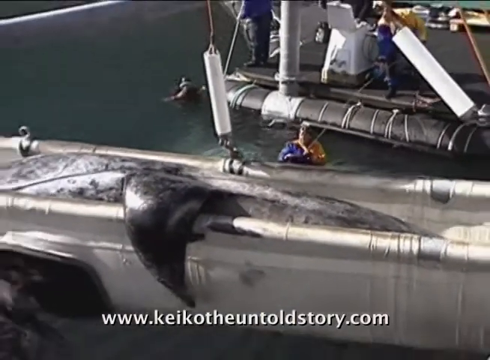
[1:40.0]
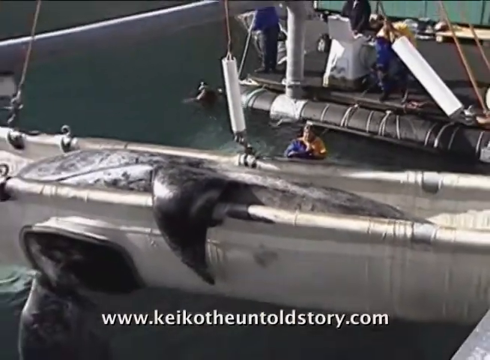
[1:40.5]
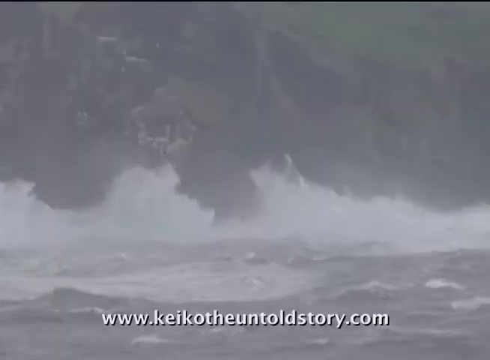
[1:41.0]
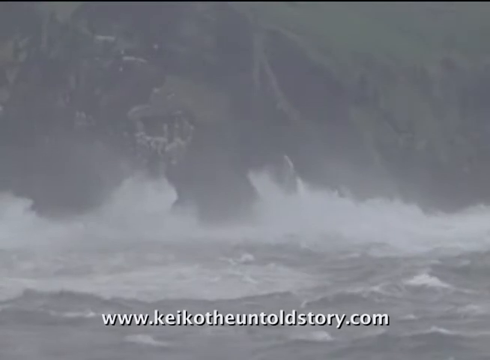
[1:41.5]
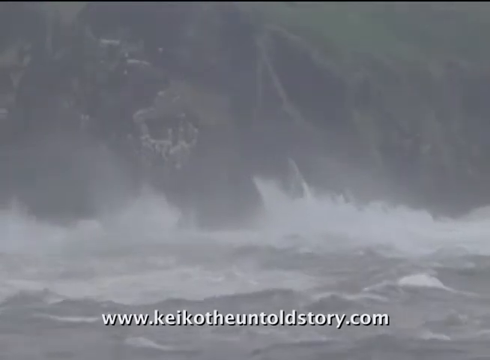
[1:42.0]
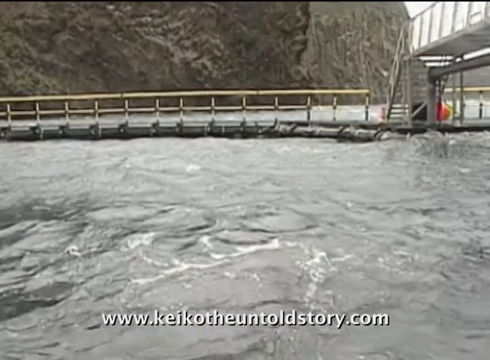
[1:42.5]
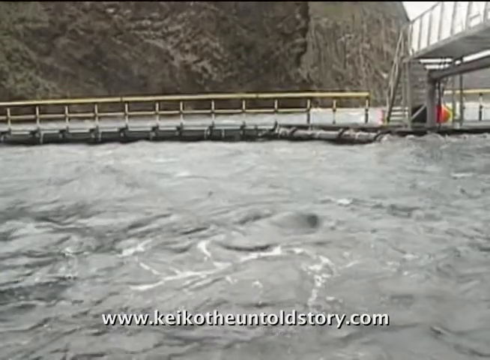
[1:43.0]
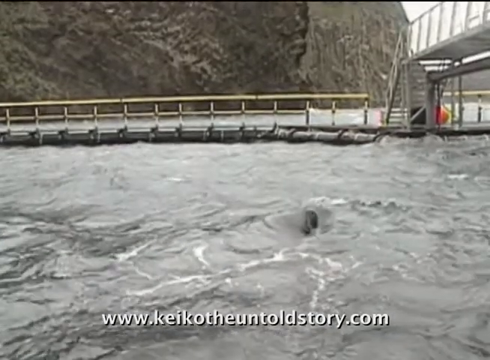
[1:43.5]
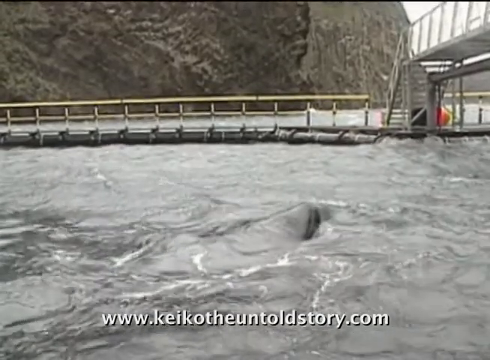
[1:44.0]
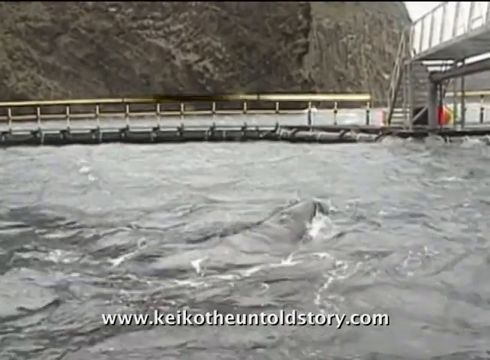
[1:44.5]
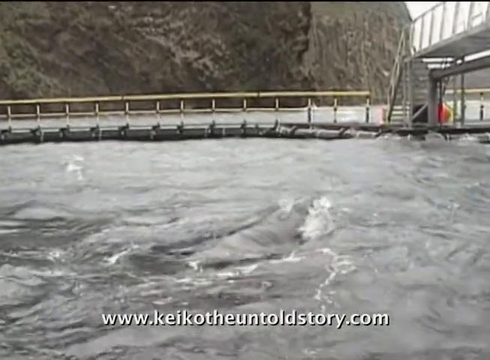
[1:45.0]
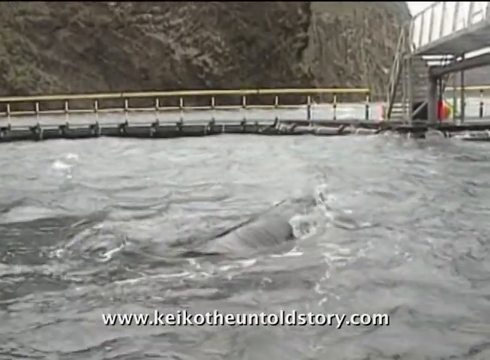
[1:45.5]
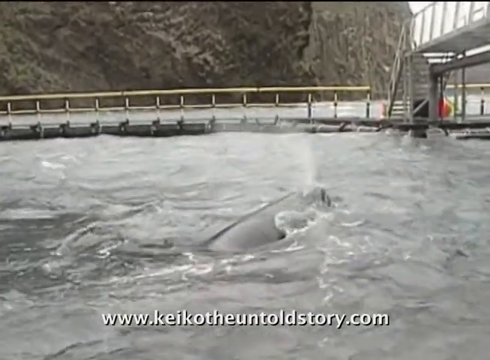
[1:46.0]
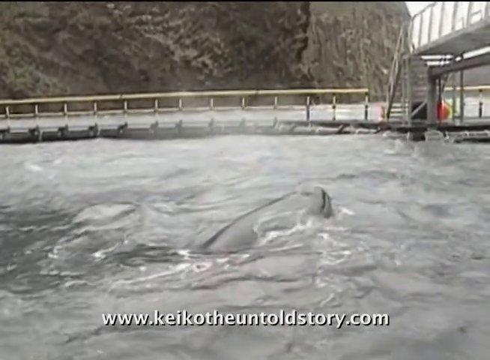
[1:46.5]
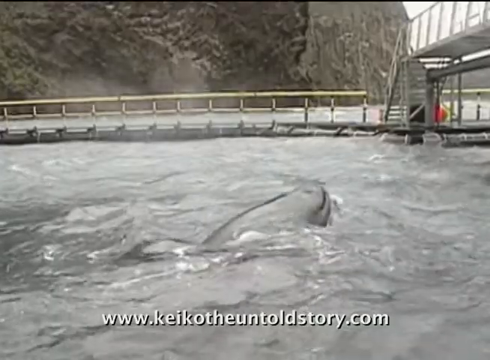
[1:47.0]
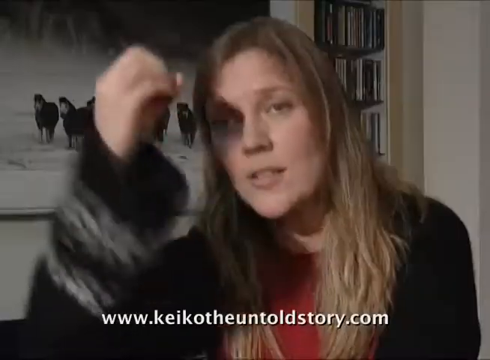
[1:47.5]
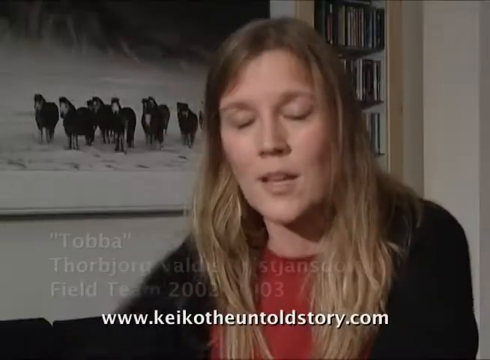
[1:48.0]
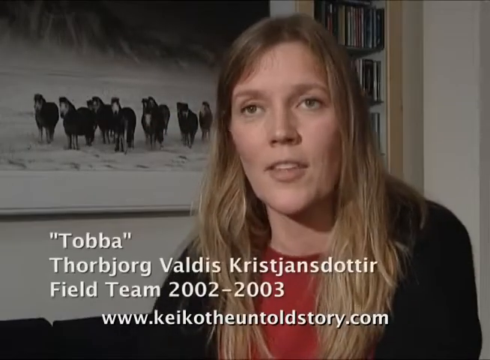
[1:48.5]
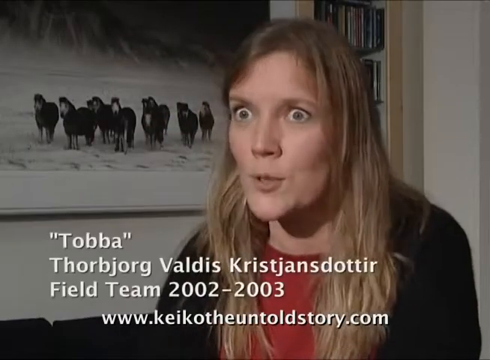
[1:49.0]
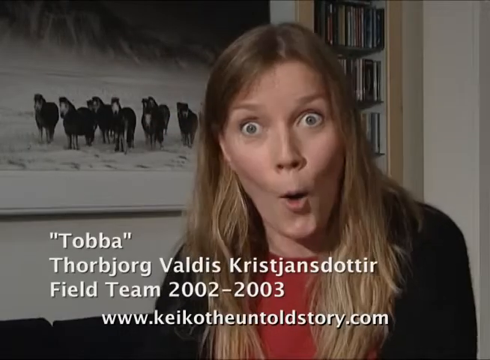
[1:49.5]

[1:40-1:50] The orca is in the sling with its fin flopping over the side, with water in the background. In the water are two men, one in full scuba gear with a mask and the other wearing a blue and orange suit. Behind them is a raft with a pontoon, with two workers on it. White lettering at the bottom of the screen says "www.keikotheuntoldstory.com." The shot pans out, then switches to a stormy sea smashing against cliffs in the background. Next is what looks like a pen in the water, with pontoons, railing, steps and a platform. The water is a dark, almost black-gray with some white frothing, and the cliff is in the far background. The water is moving and agitated, and an orca appears, rising up and spitting air from its blowhole. The shot switches to a woman with long, straight blonde hair wearing a black sweater and a red shirt; she raises and drops her hand. Behind her is a framed image of horses standing in either snow or sand with a mountain behind them, and to her right is a shelf with what looks like CDs. White lettering at the bottom reads "'Tobba' ThorBjorg, Valdis Kristjansdottir, field team 2002 to 2003," with "www.keikotheuntoldstory.com" below it. The woman is talking; her eyes widen and she opens her mouth like an "O." She is very animated as she speaks.